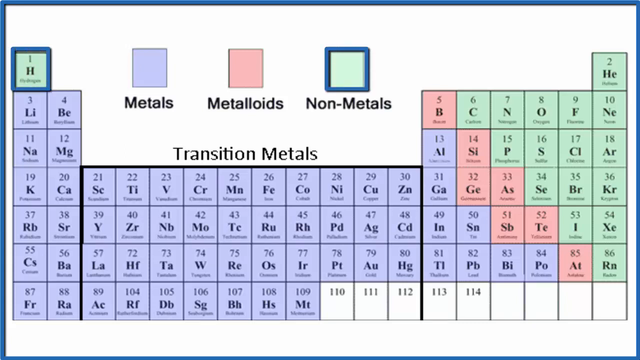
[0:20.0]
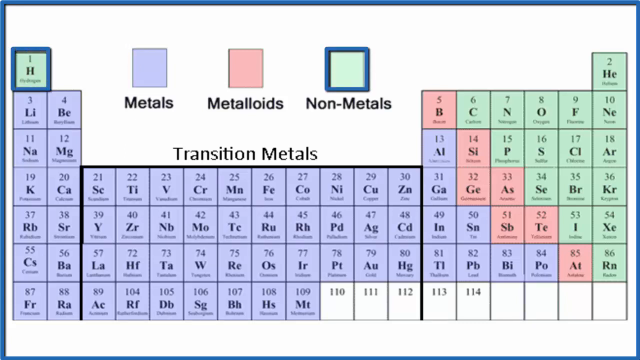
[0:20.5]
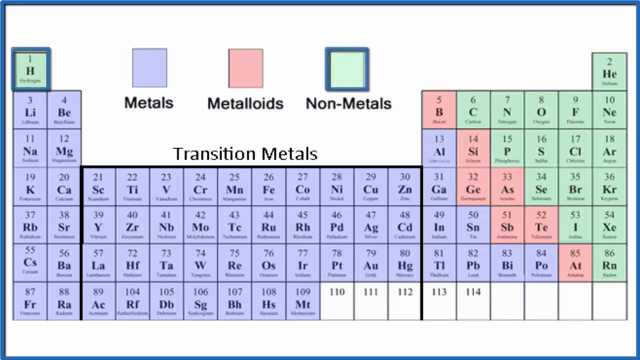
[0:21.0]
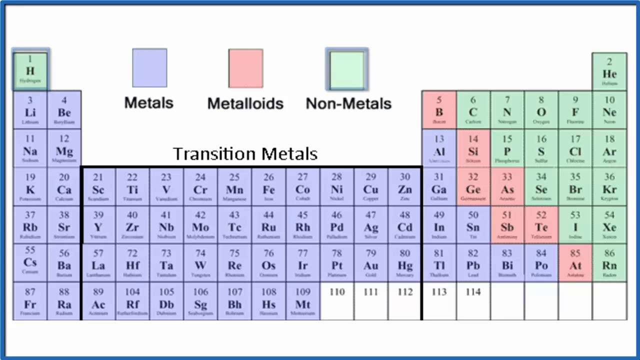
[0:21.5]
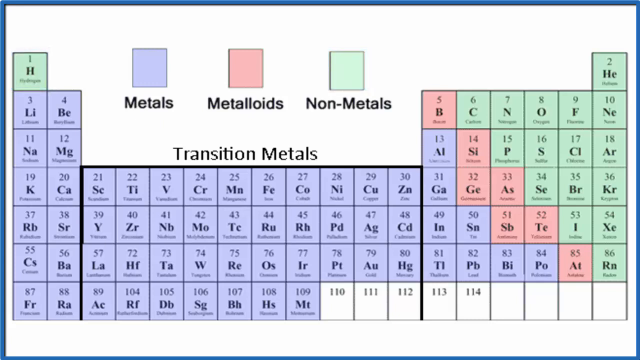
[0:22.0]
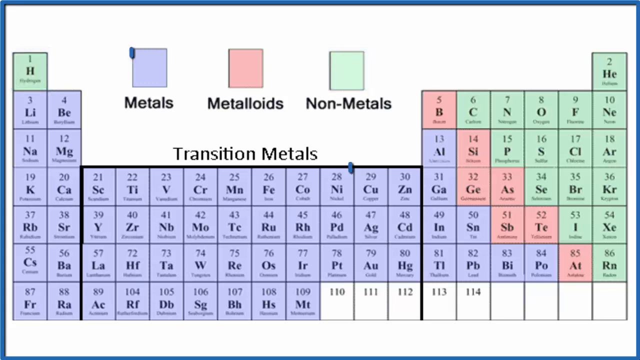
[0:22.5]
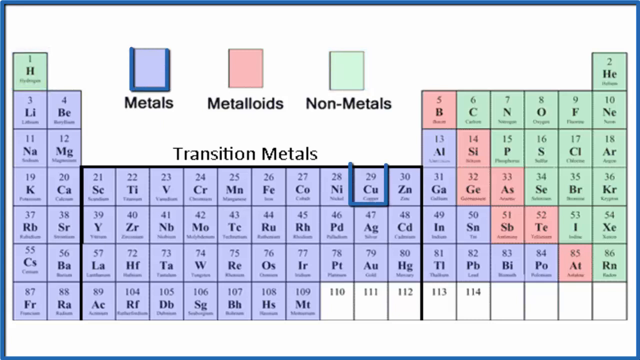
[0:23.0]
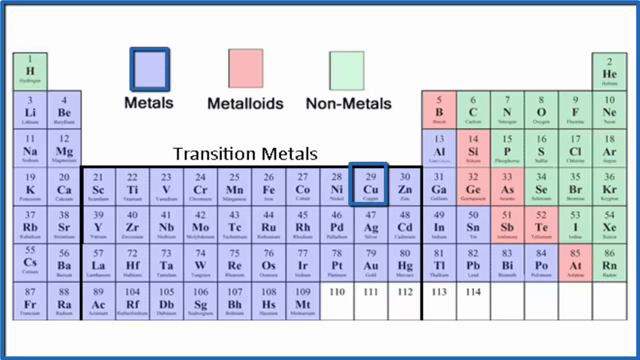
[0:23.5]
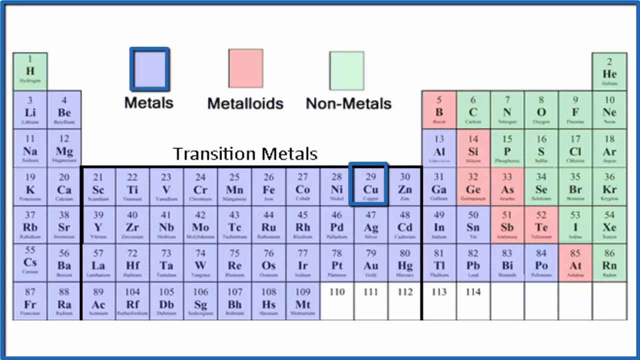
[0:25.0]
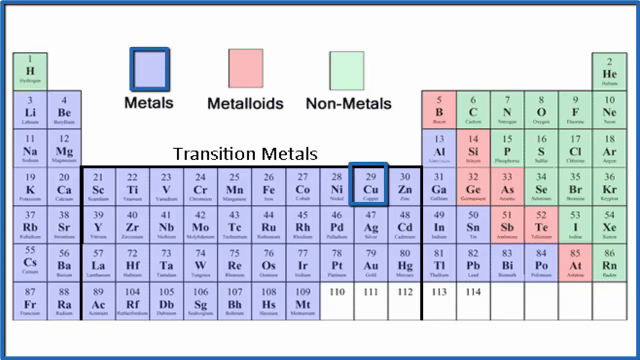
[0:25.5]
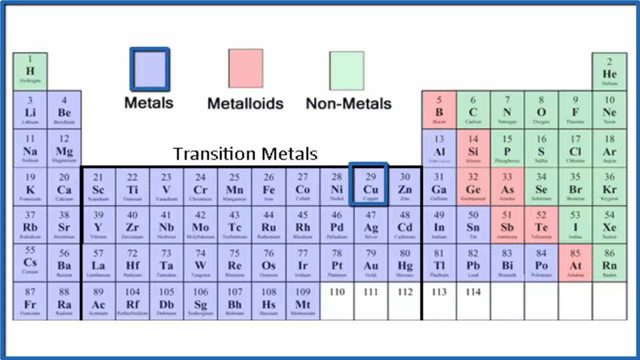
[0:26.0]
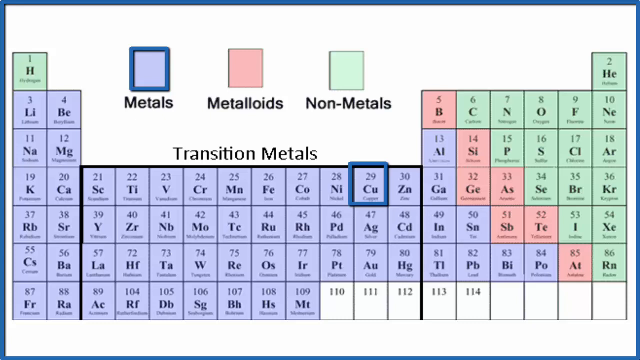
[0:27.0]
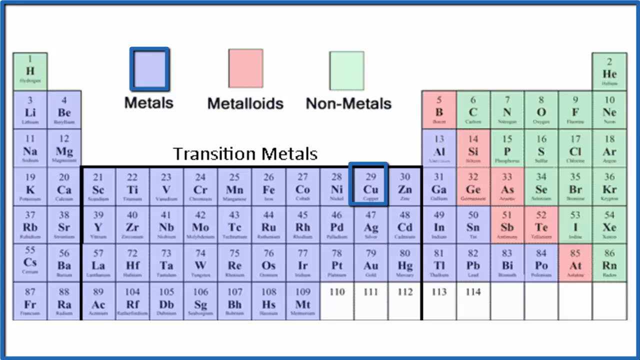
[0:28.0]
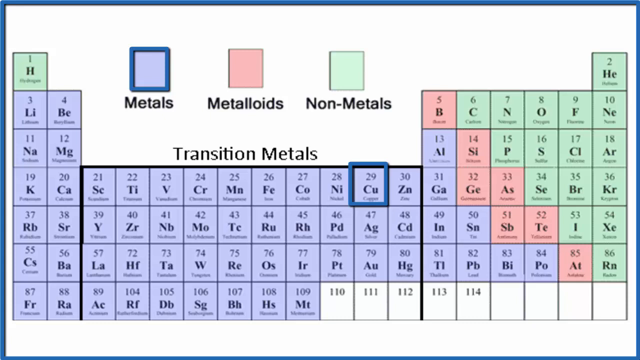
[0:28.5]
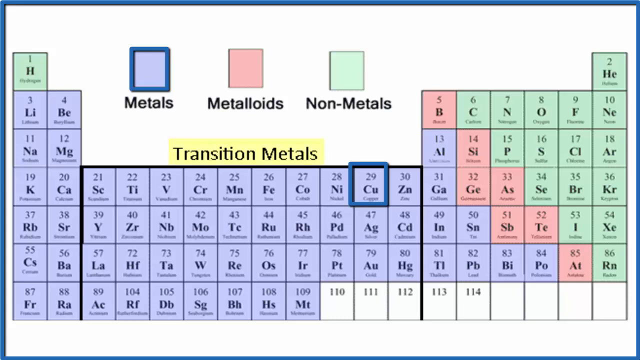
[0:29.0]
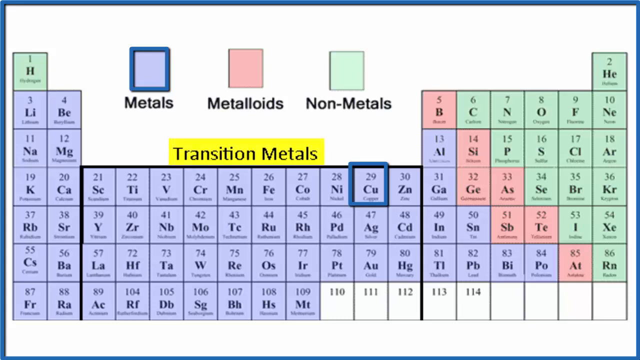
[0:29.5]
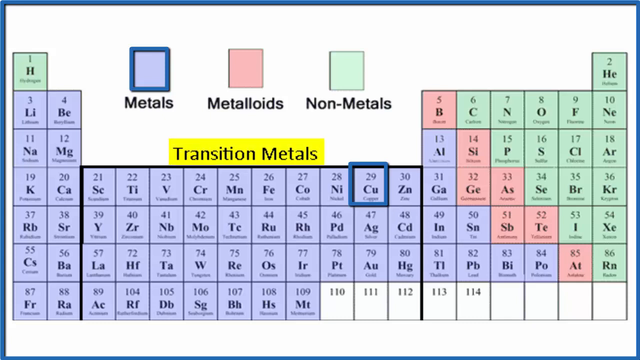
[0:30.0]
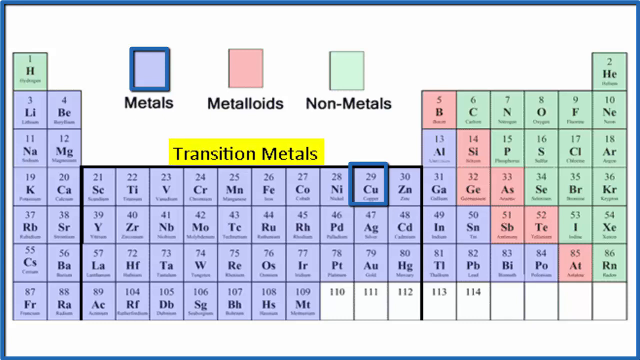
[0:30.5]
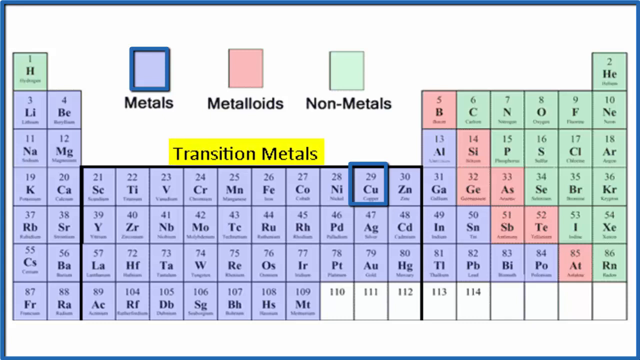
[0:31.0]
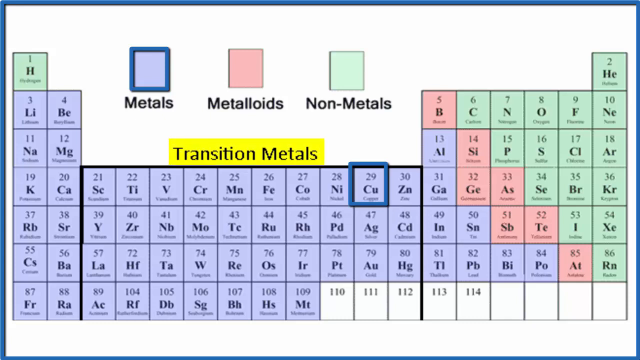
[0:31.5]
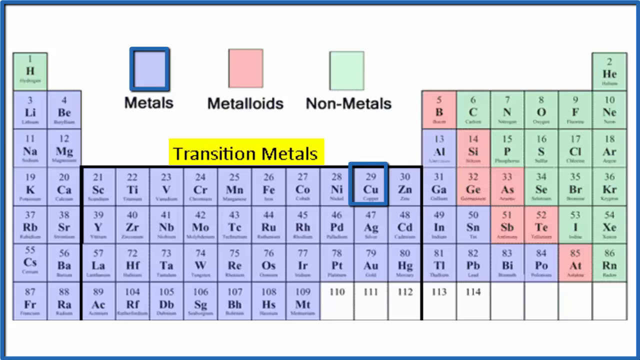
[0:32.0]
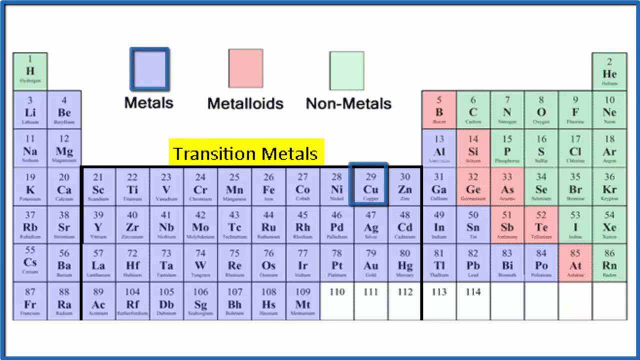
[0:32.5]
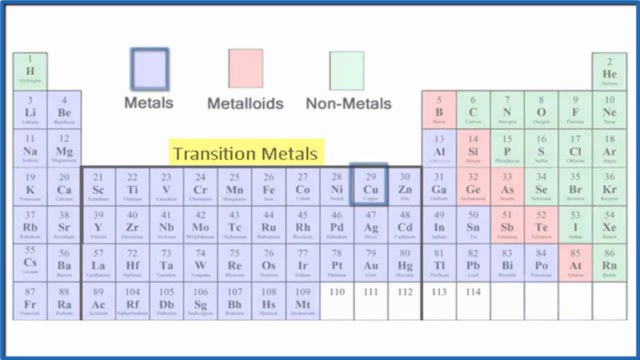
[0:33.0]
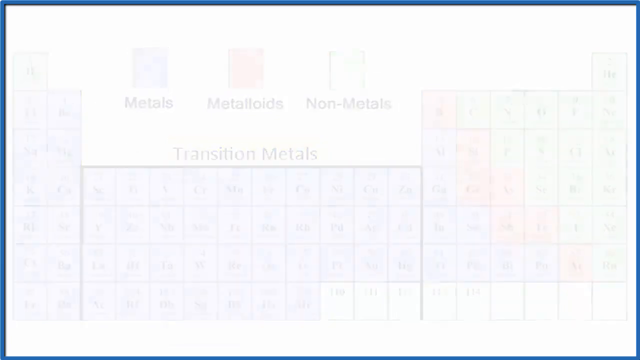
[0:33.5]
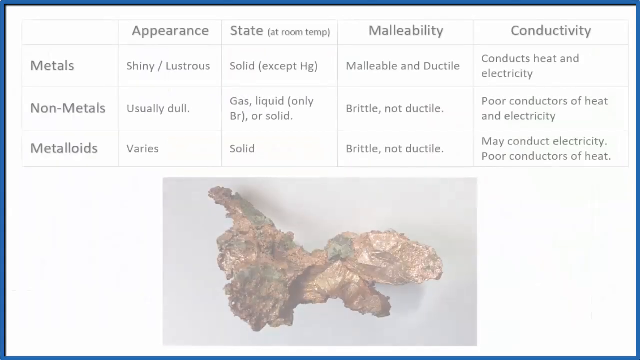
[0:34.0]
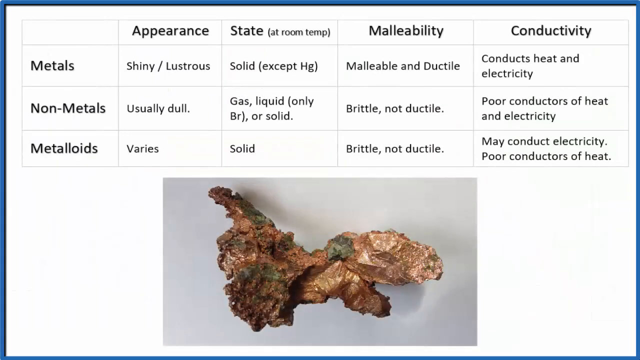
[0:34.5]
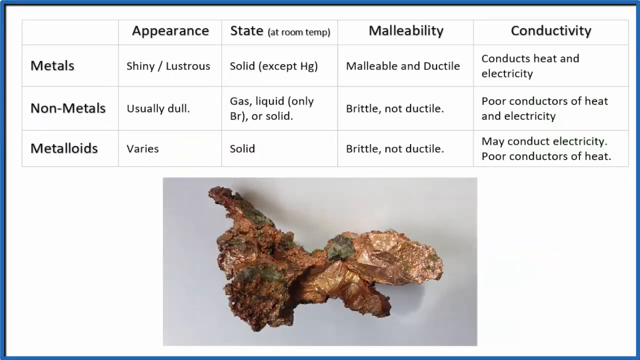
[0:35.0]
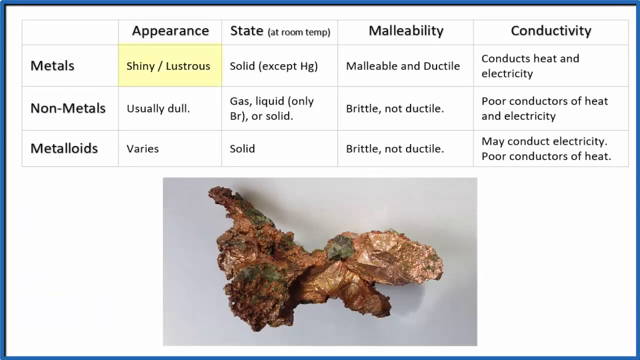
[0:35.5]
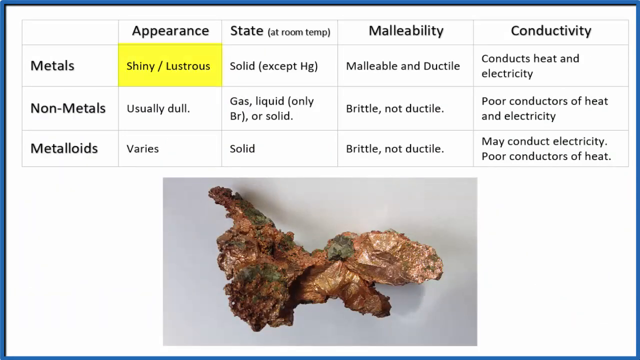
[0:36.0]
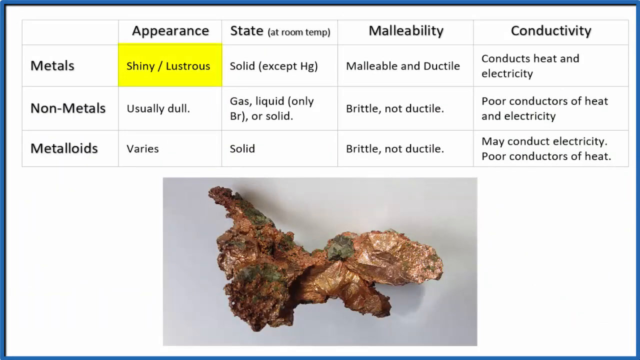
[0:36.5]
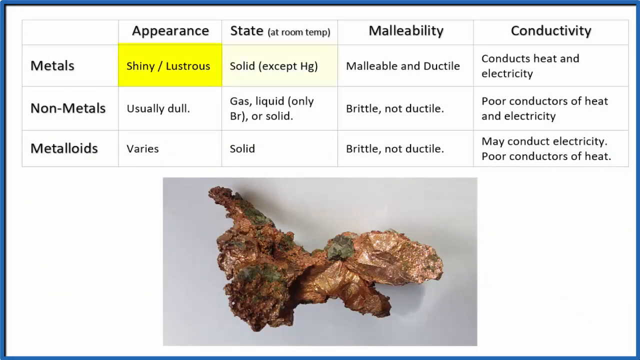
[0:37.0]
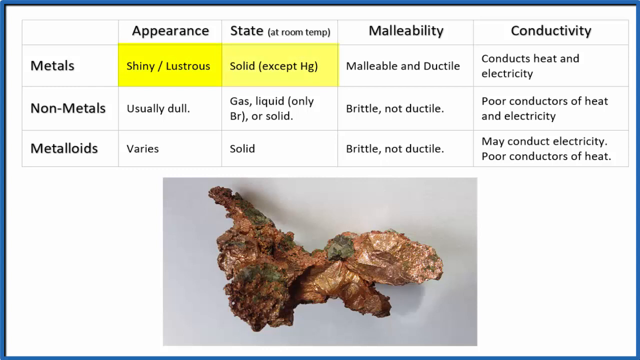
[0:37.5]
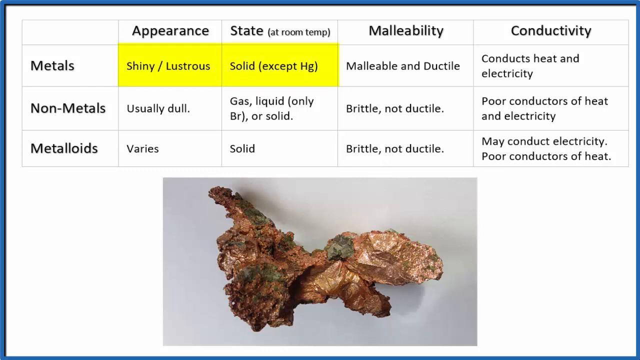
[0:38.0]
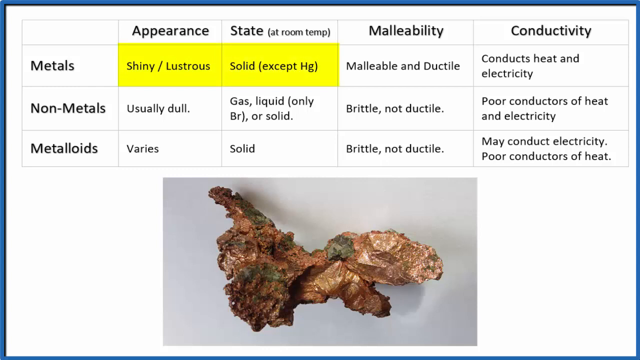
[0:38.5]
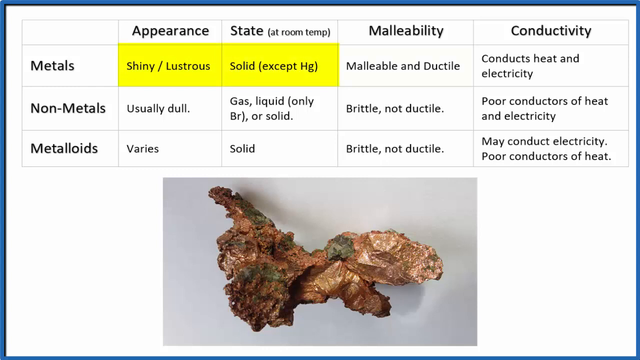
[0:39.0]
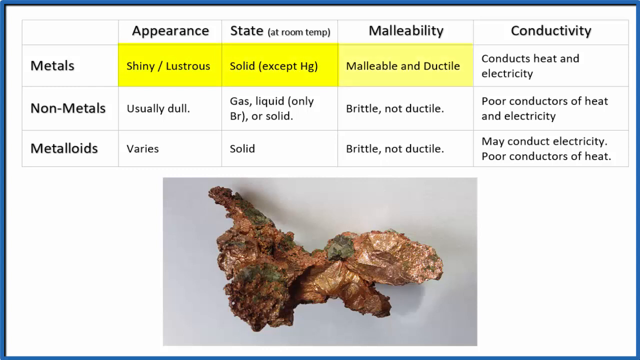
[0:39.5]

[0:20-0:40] A periodic table is on the screen with three boxes at the top: anything marked in purple is a metal, anything in pink is a metalloid, and anything in green is a non-metal. A box is put around a green element that says hydrogen, and around the non-metals. Then a box is put around Cu for copper, number 29, and the word metals also appears in that section. A "transition metals" label is put up at the top of the periodic table on a yellow background. Next the appearance of copper is shown, stating that it is shiny and lustrous and is a metal; it is usually solid, malleable and ductile, and conducts heat and electricity. There are also lines for non-metals and metalloids, showing the differences in characteristics between metals, metalloids and non-metals.